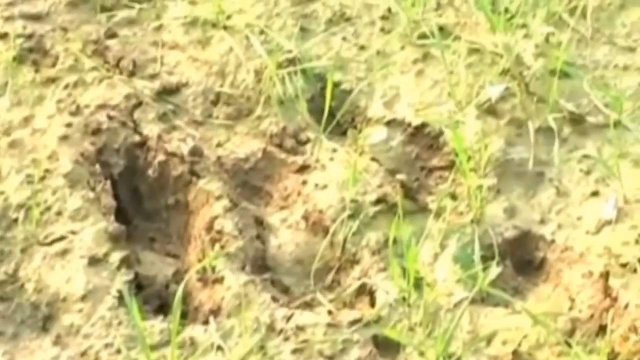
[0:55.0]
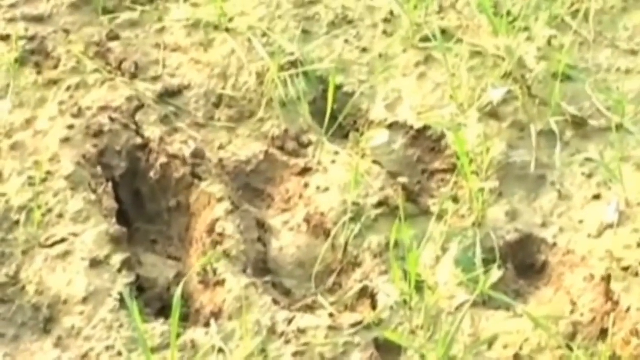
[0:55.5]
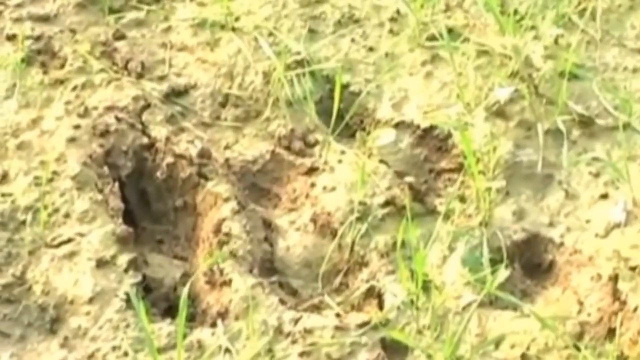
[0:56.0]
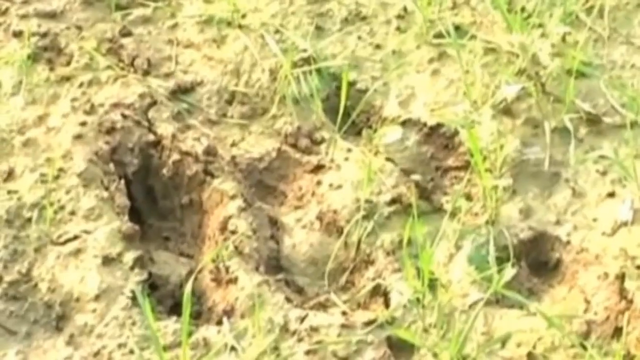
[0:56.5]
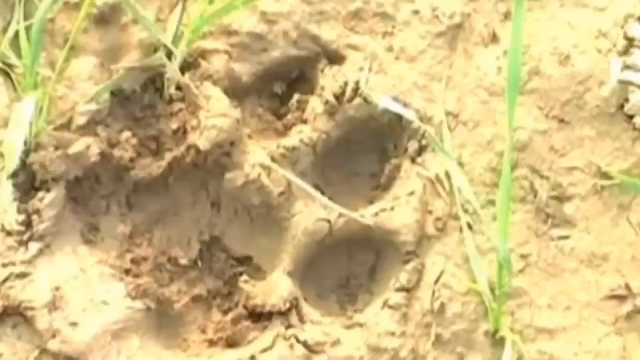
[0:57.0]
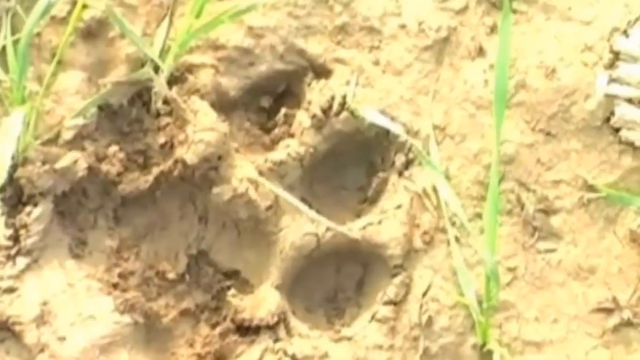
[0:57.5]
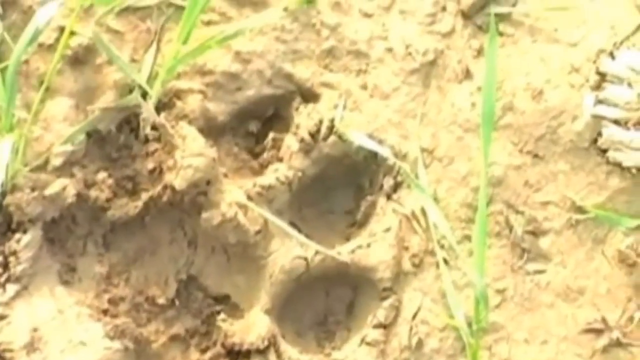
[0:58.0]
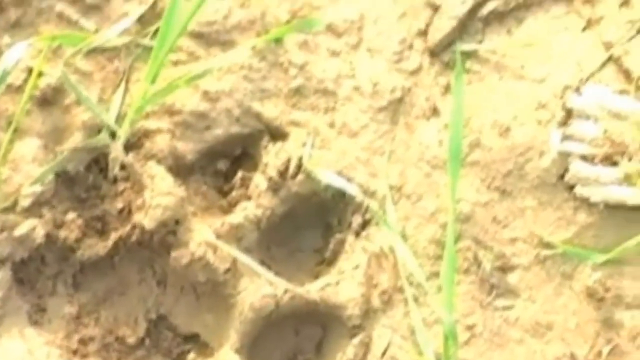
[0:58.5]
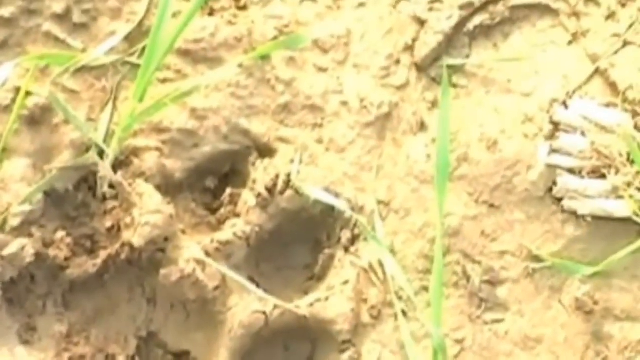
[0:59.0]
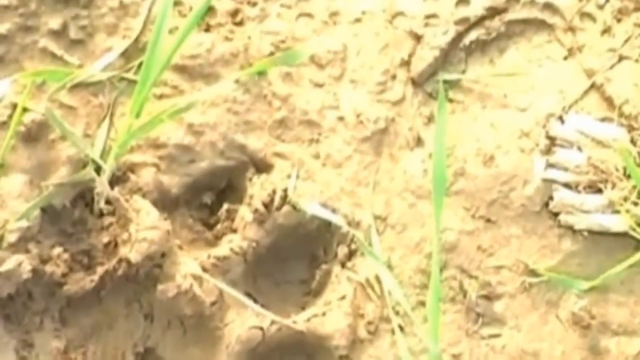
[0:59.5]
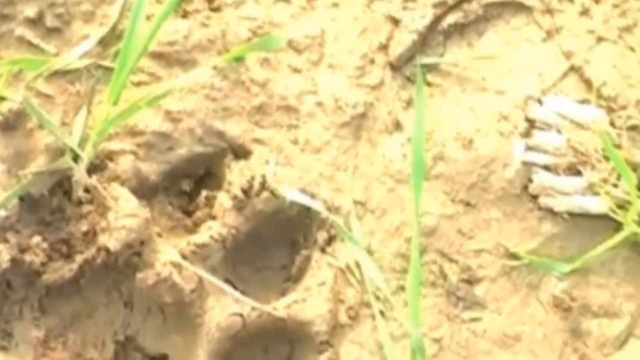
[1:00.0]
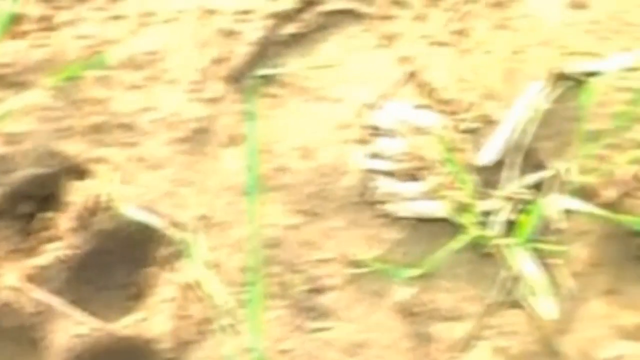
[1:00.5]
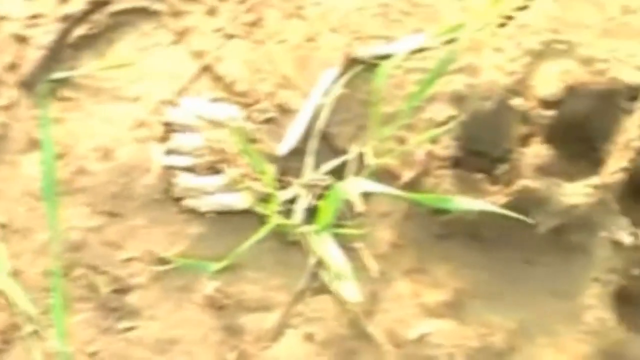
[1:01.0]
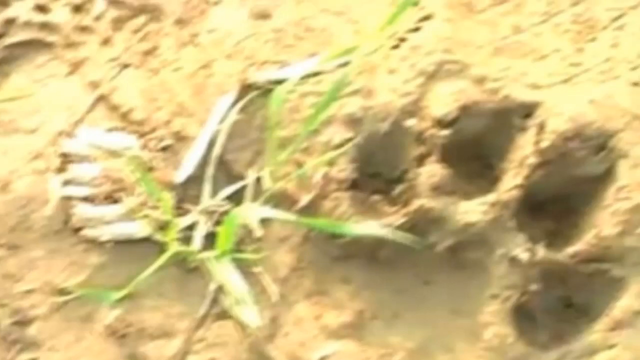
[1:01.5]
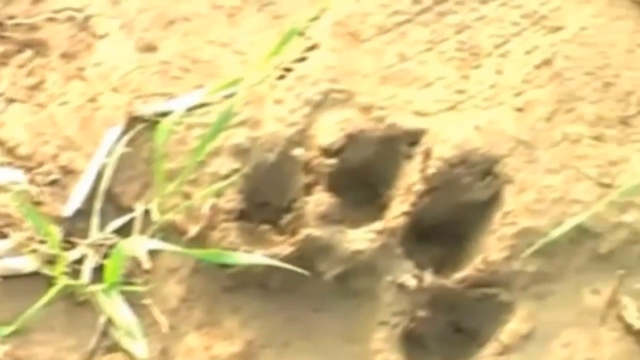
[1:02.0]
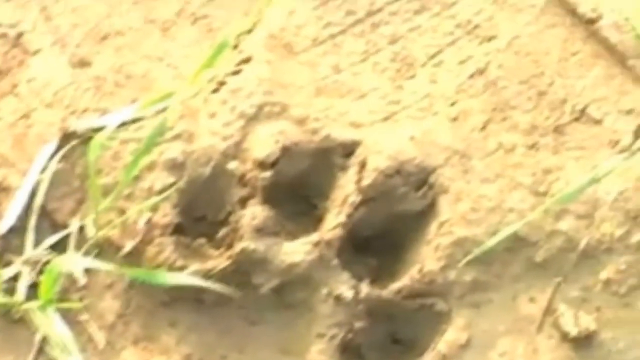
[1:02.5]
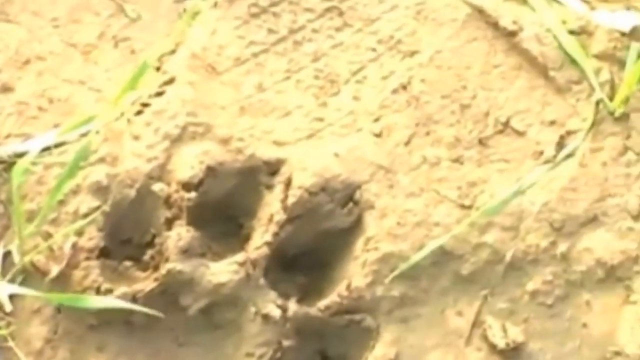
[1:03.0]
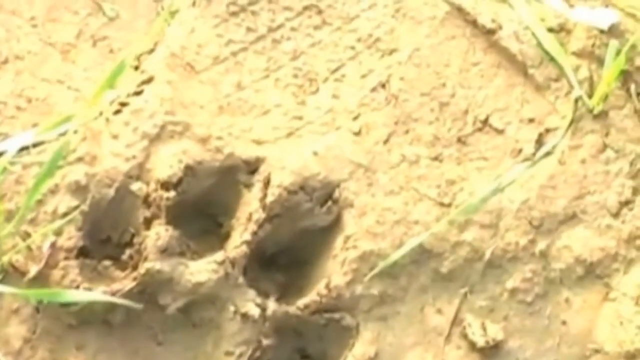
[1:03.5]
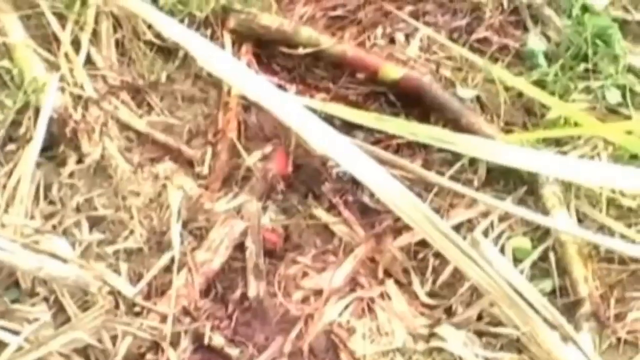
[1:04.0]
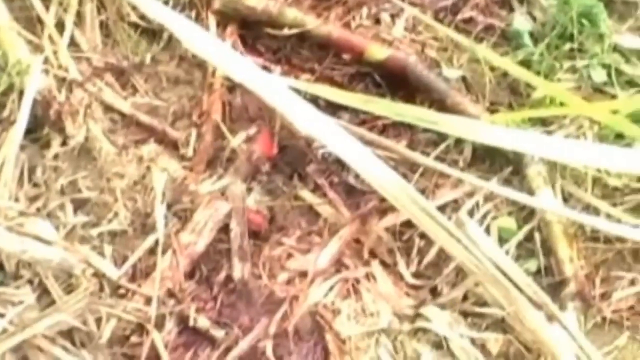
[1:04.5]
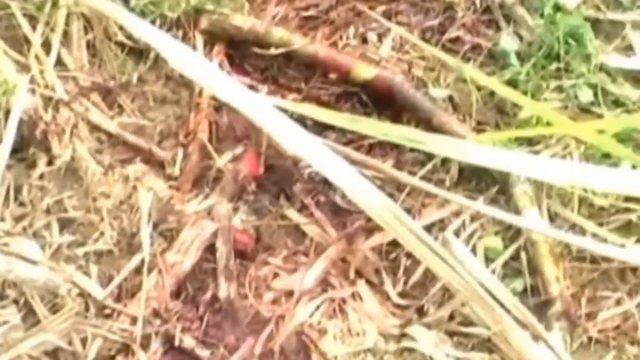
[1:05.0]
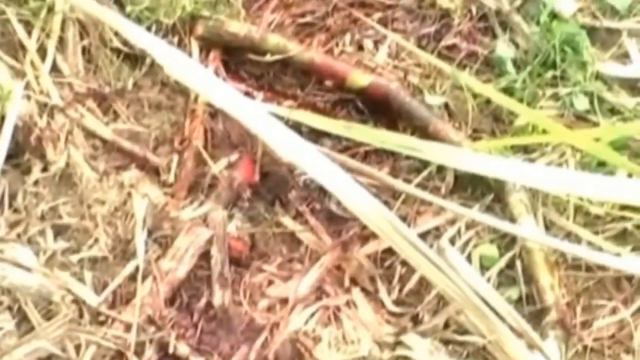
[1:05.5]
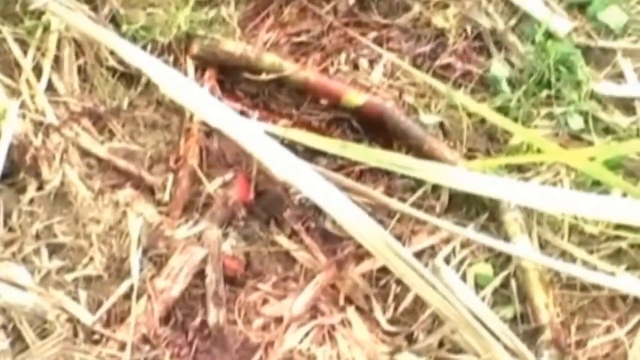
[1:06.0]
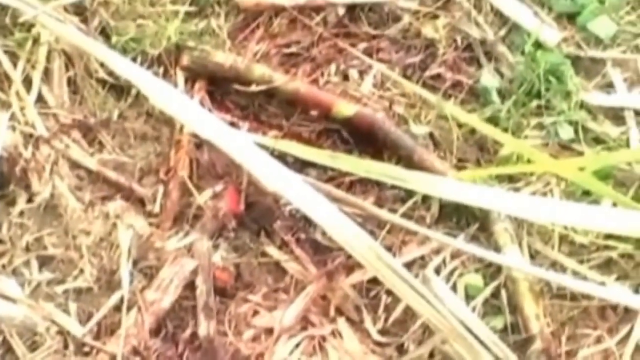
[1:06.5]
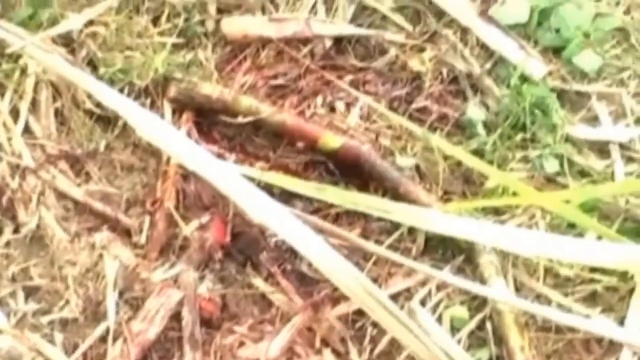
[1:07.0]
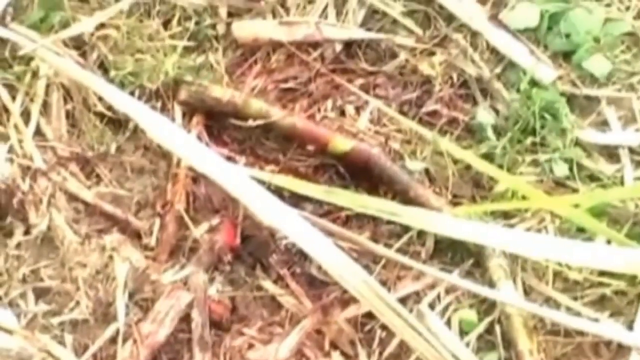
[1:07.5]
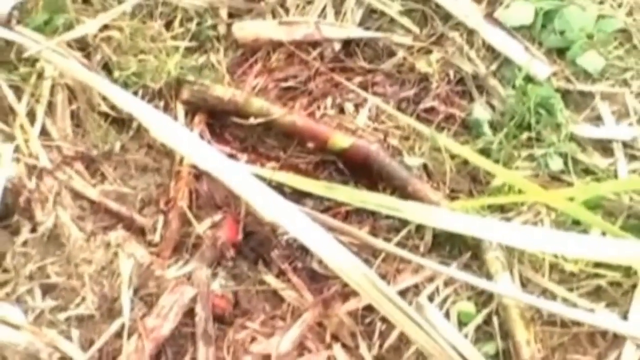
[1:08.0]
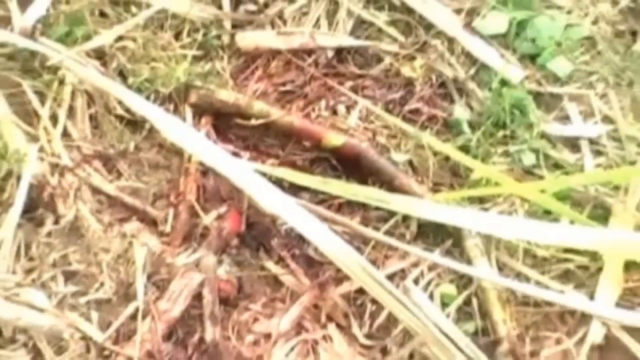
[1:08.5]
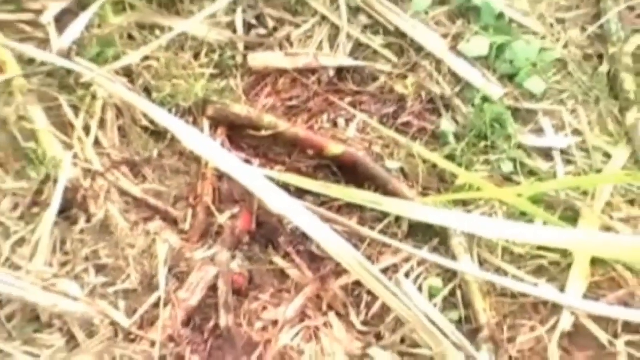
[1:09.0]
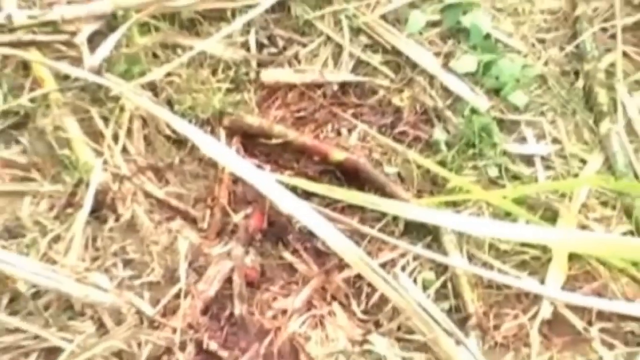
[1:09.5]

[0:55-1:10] A giant paw print appears, then multiple paw prints of the tiger showing where it has been. There is blood on the grass and mud. The montage cuts back and forth between the blood and the paw print. These seem to be evidence of the tiger's movements, and people are perhaps tracking its location.